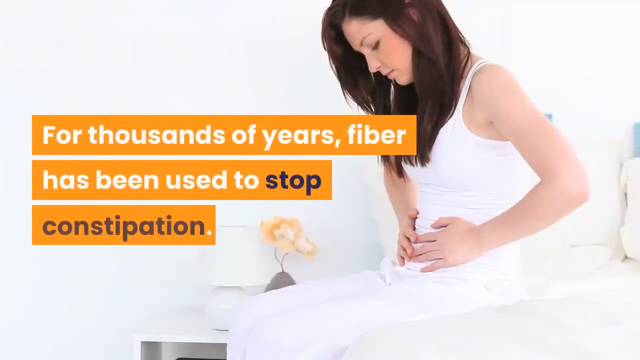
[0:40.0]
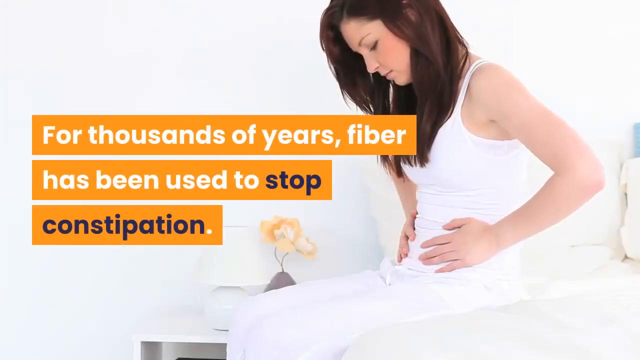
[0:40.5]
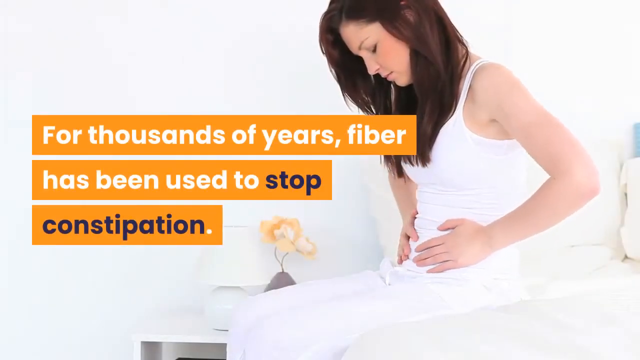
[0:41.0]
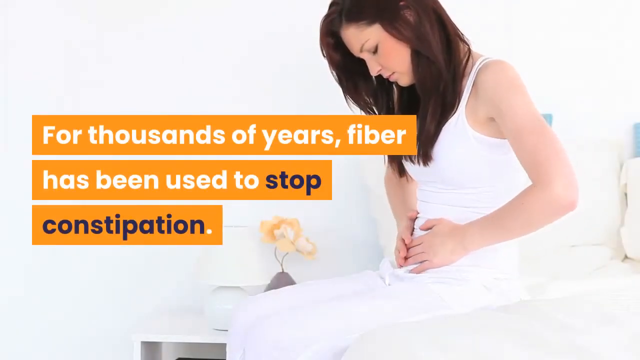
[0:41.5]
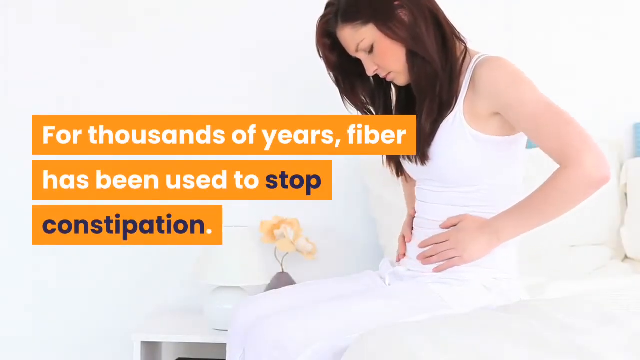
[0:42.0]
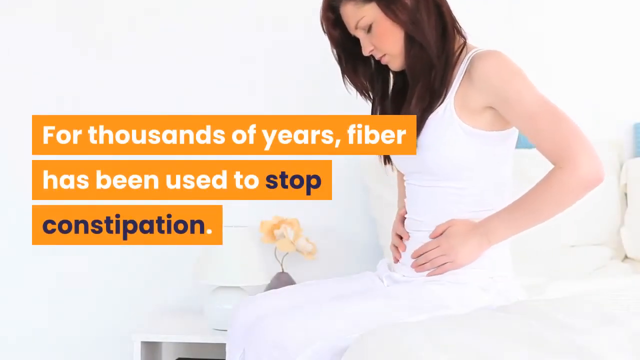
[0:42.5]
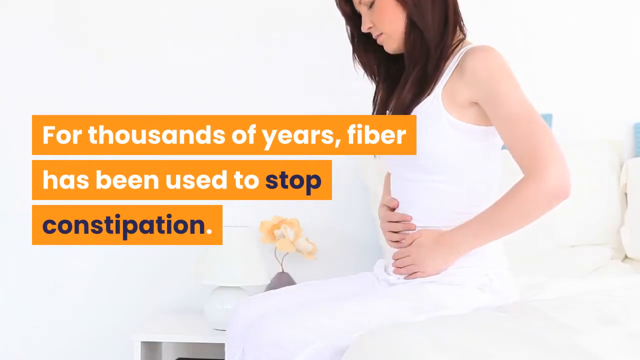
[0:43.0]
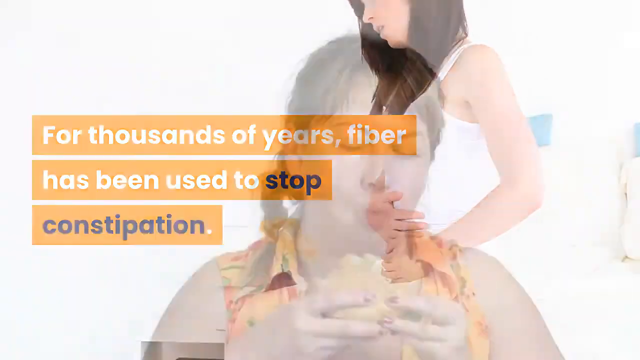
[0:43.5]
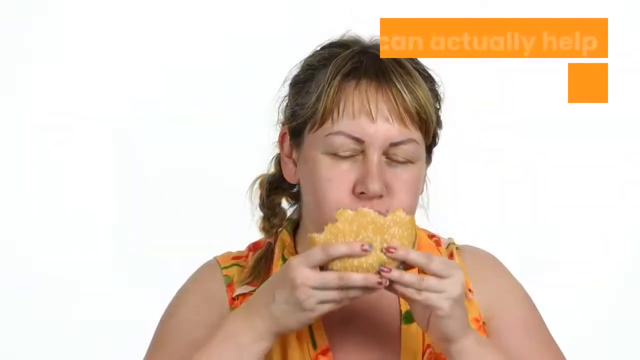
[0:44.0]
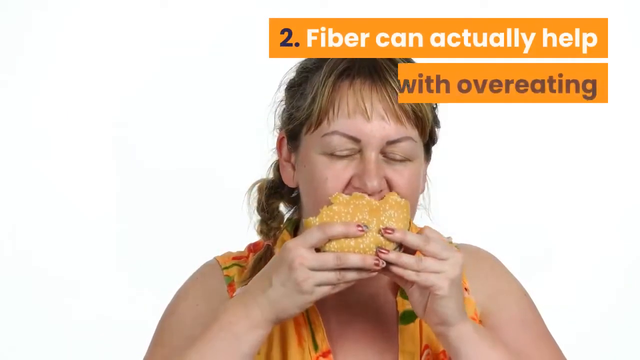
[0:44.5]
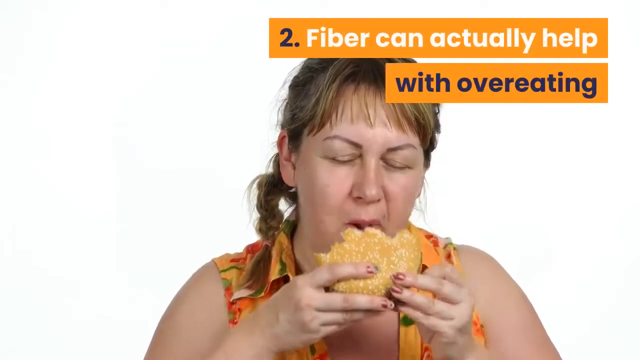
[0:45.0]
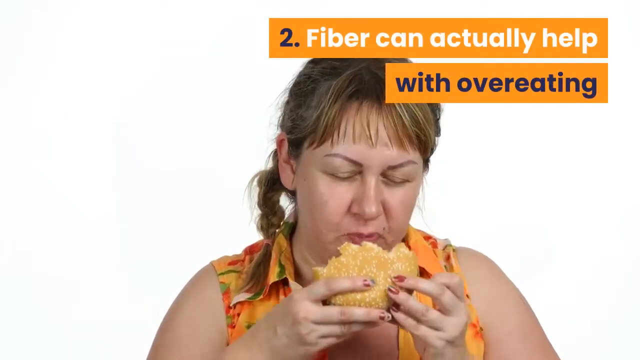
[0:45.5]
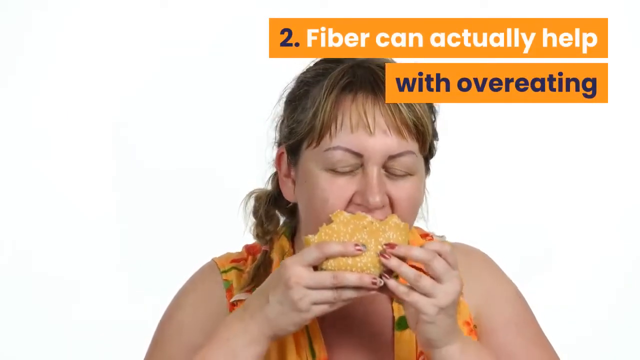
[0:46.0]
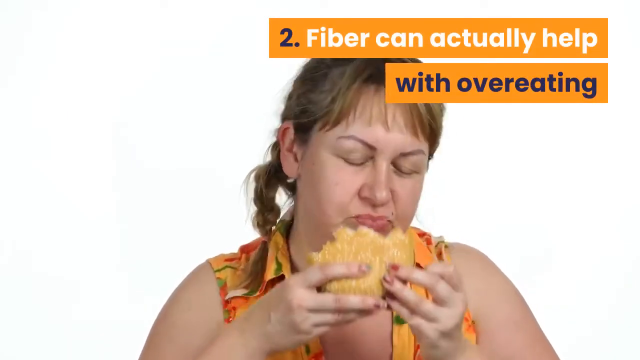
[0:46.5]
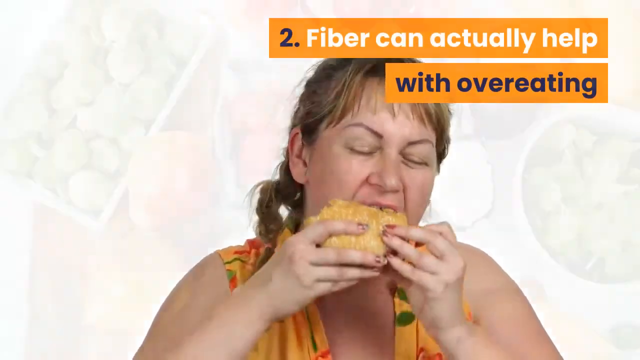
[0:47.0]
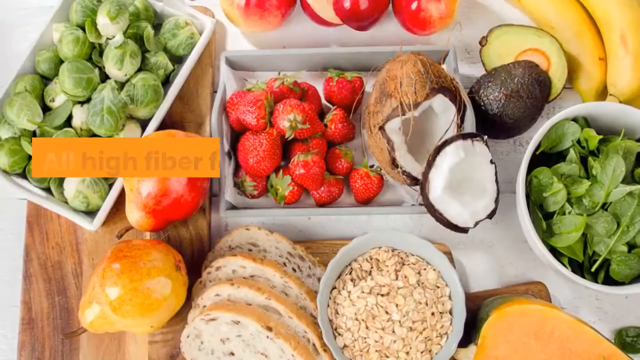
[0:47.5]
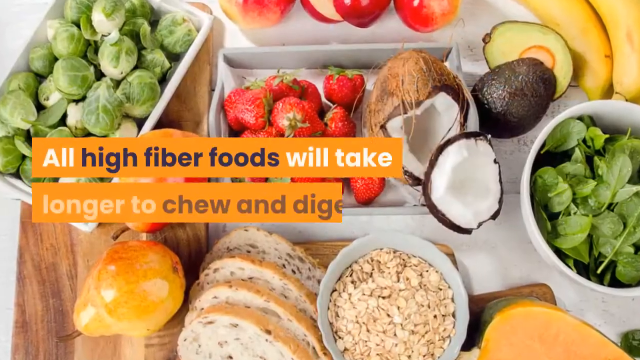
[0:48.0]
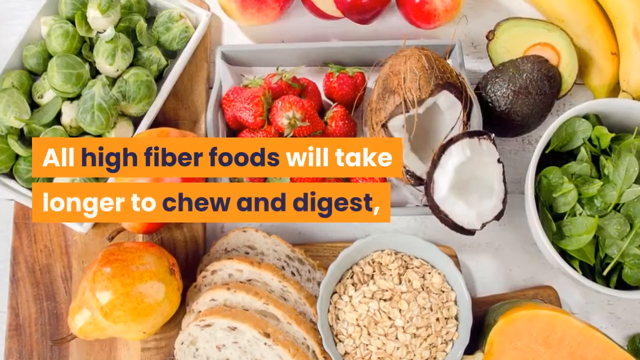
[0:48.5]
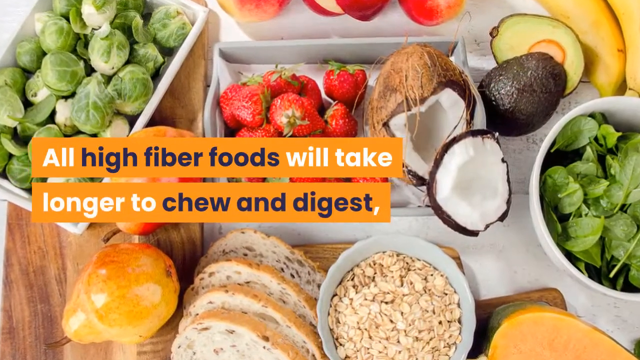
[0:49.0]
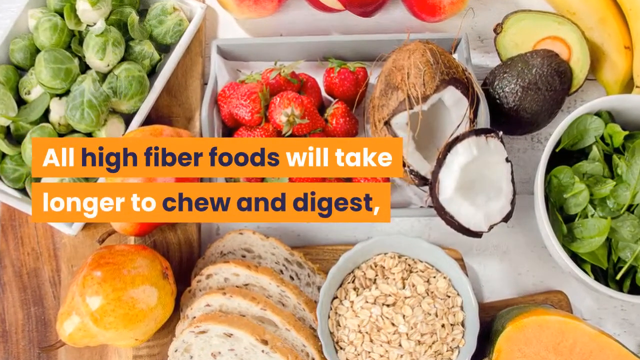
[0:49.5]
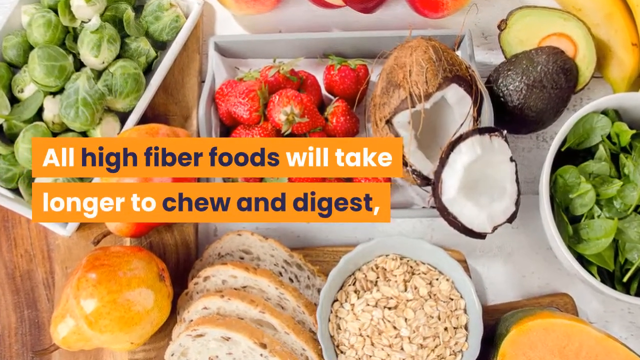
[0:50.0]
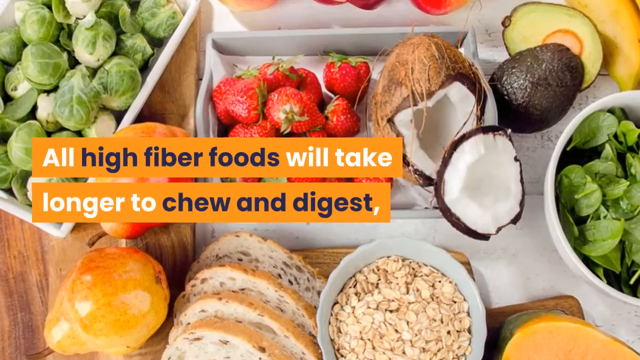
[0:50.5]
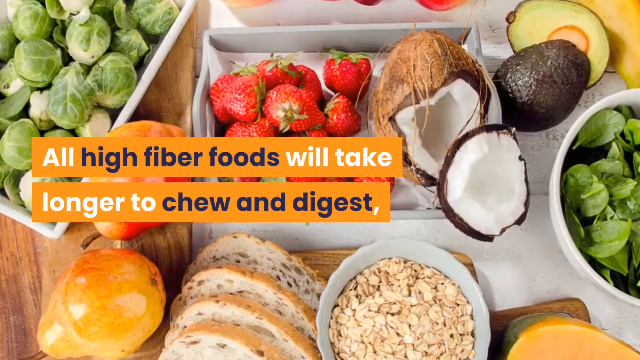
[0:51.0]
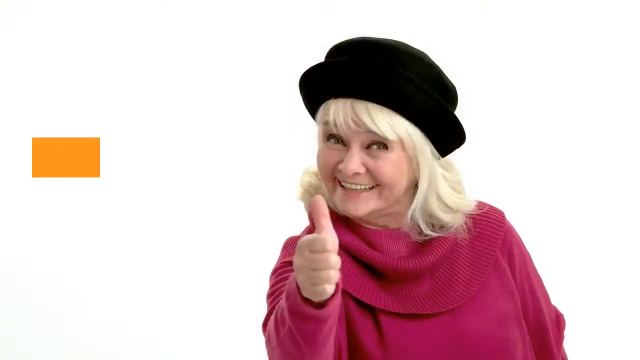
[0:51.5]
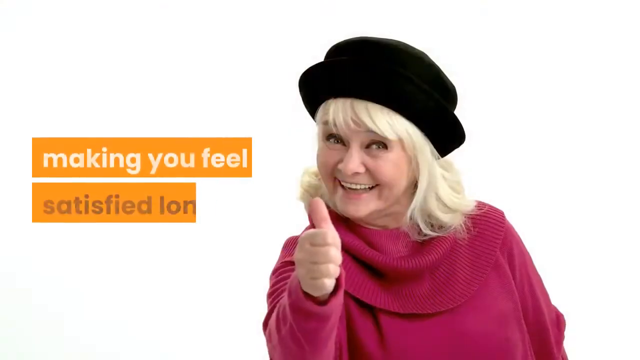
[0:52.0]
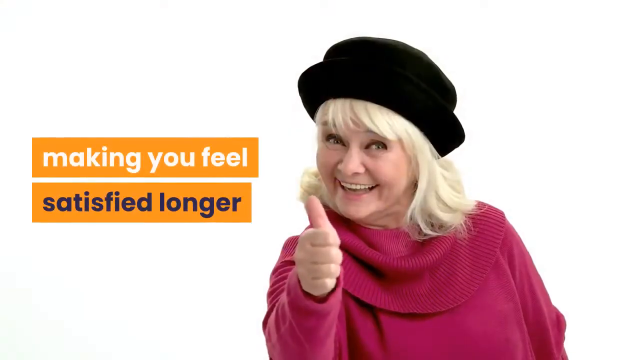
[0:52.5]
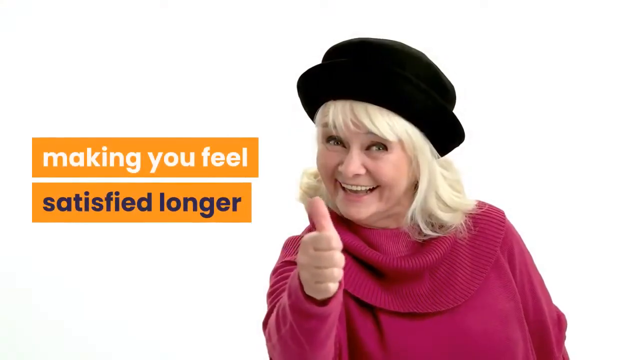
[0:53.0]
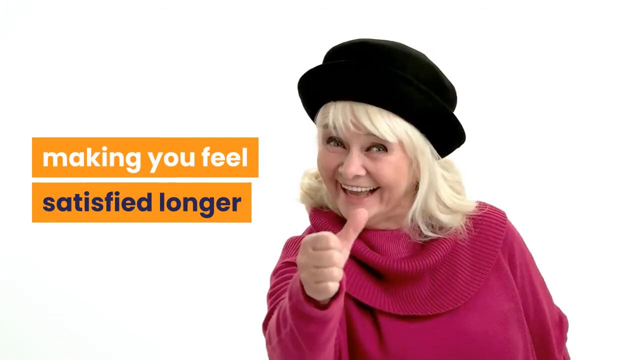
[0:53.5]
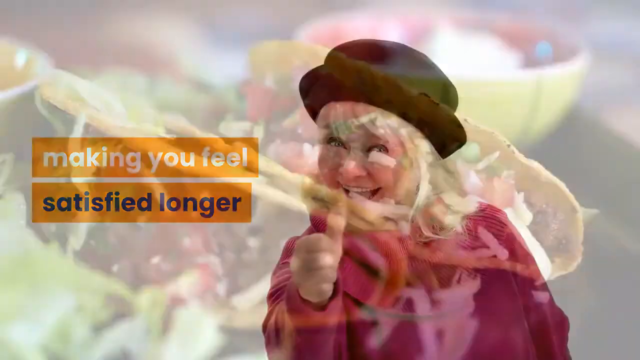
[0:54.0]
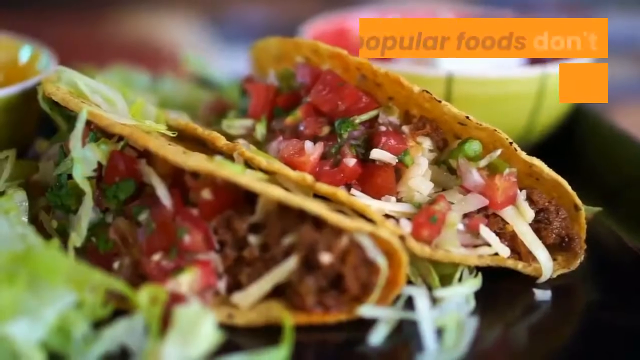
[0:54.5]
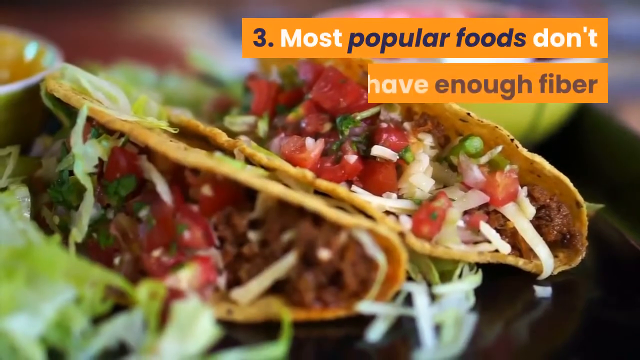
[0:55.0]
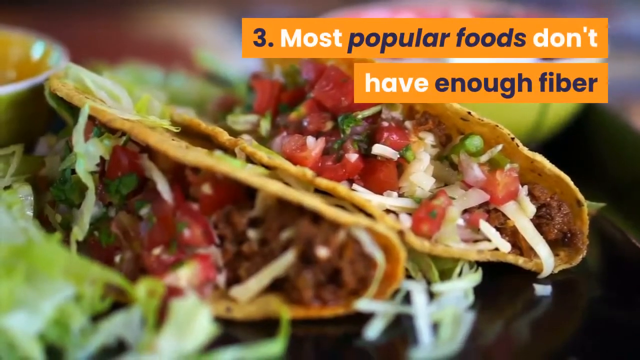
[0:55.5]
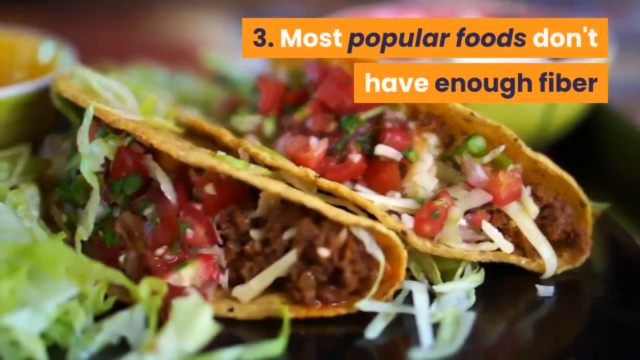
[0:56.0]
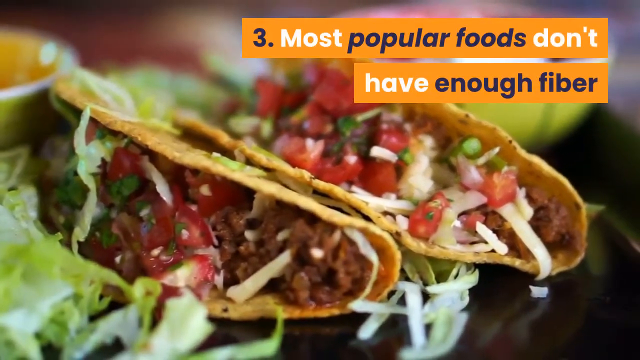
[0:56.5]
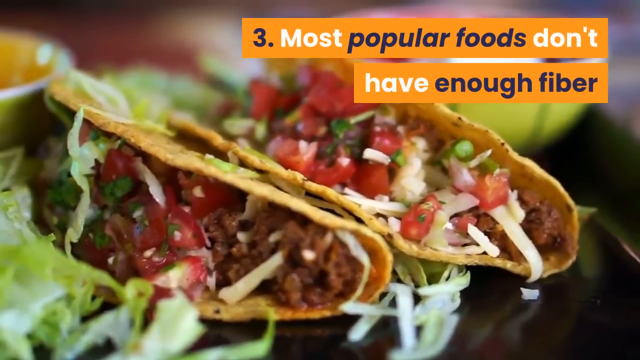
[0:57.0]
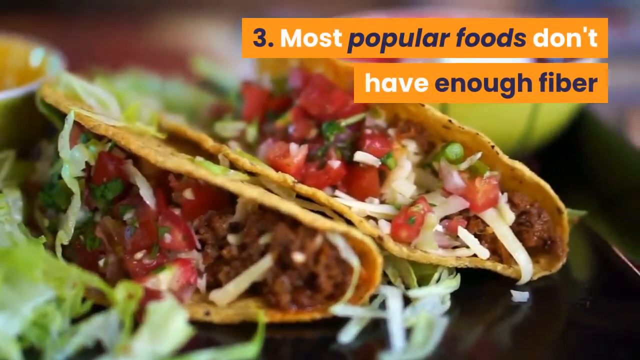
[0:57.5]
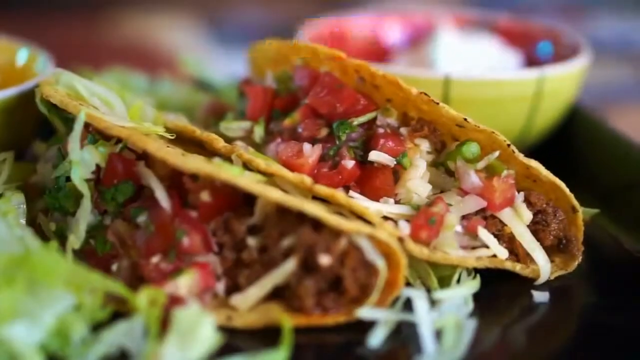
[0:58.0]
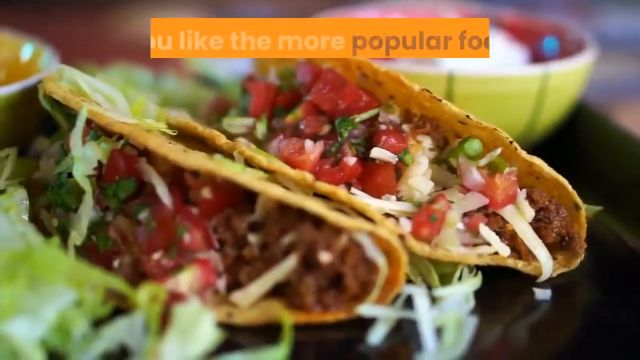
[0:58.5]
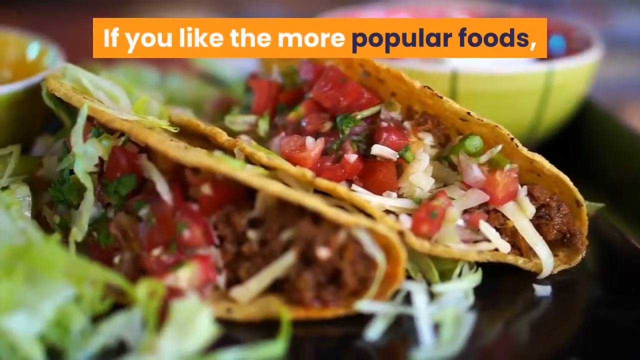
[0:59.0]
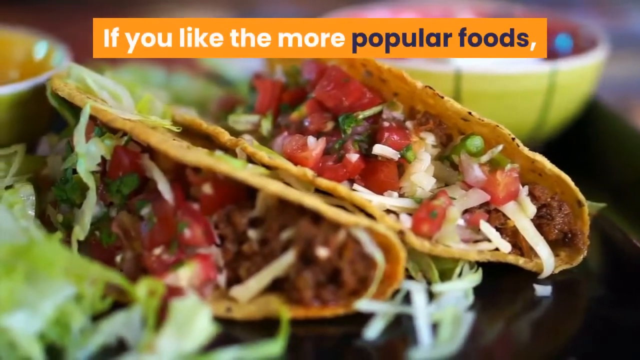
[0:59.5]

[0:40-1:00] A photo shows a woman dressed in all white holding her stomach. The slide reads "For thousands of years, fiber has been used to stop constipation." Next, a woman is eating a cheeseburger, and the slide reads "Fiber can actually help with overeating." The following slide, over different fruits, vegetables and bread, reads "All high fiber foods will take longer to chew and digest." An older woman then gives a thumbs up and smiles at the screen, with the words next to her reading "Fiber makes you feel satisfied for longer." The text then reads "Most popular foods don't have enough fiber. If you like the more popular foods," and cuts off there.